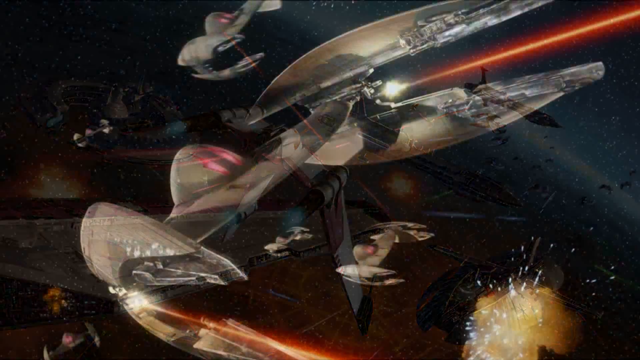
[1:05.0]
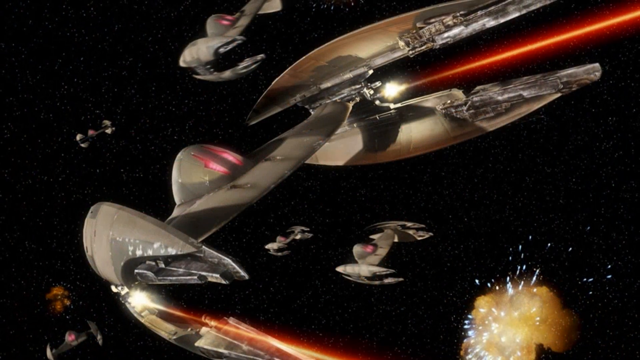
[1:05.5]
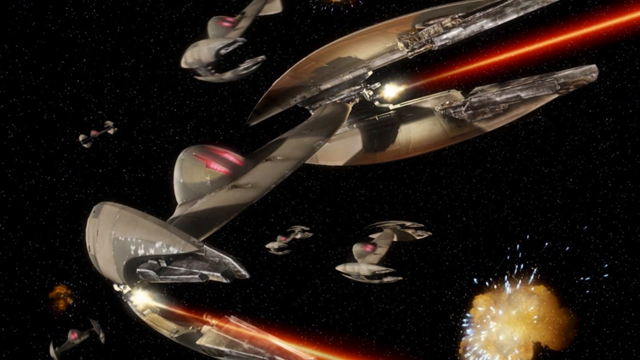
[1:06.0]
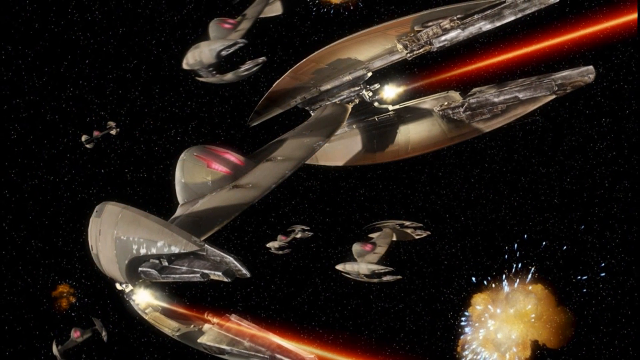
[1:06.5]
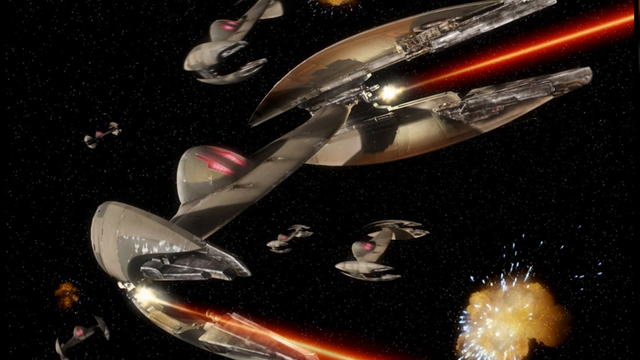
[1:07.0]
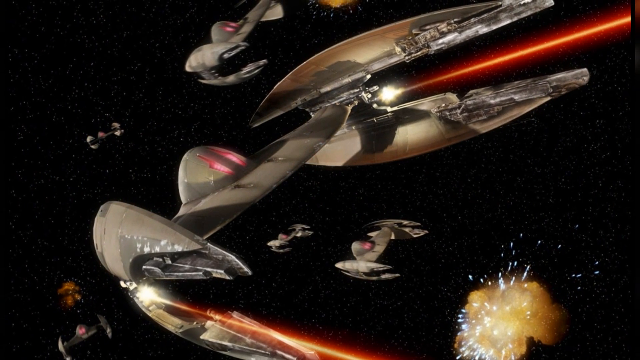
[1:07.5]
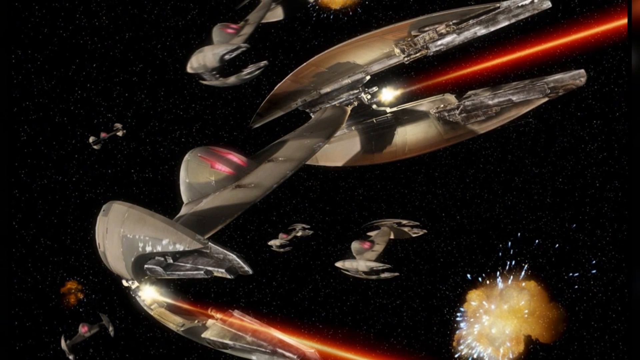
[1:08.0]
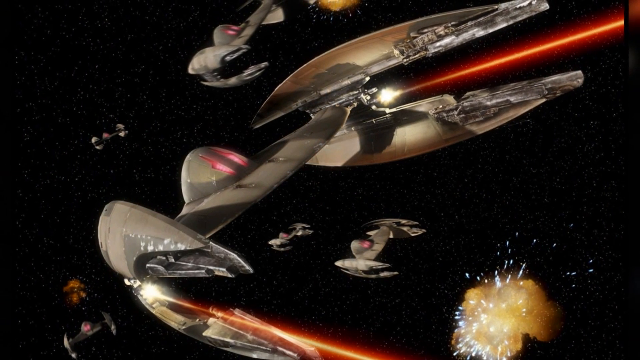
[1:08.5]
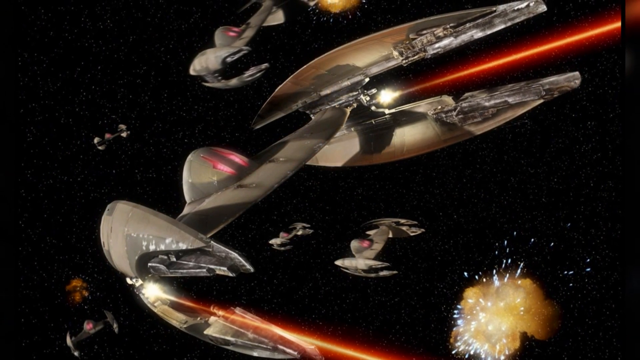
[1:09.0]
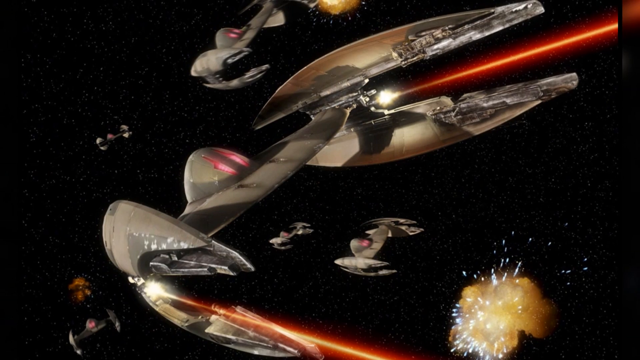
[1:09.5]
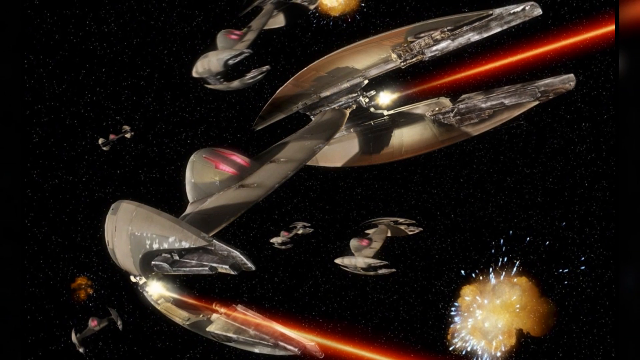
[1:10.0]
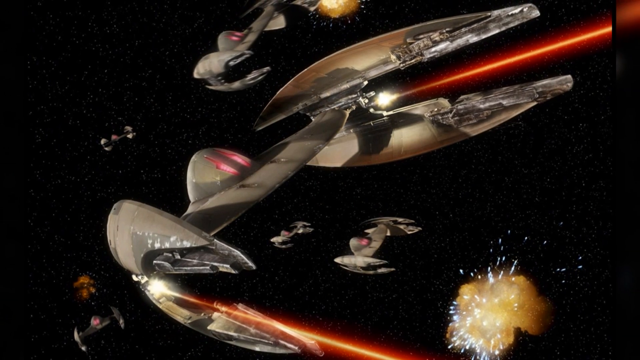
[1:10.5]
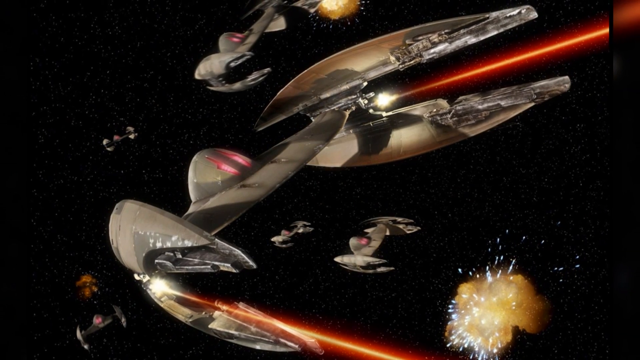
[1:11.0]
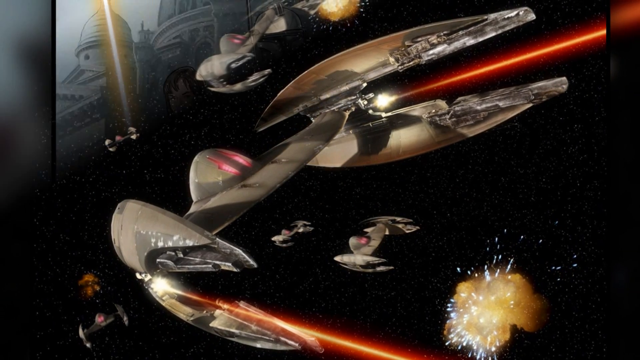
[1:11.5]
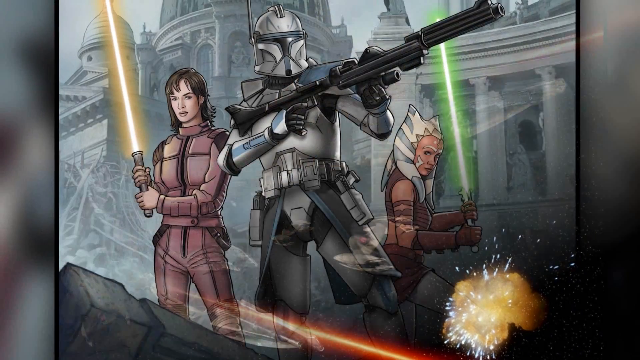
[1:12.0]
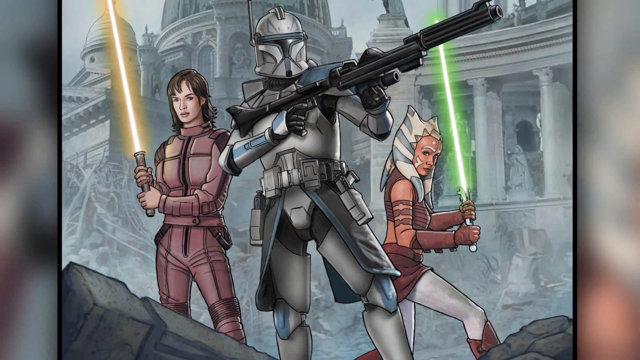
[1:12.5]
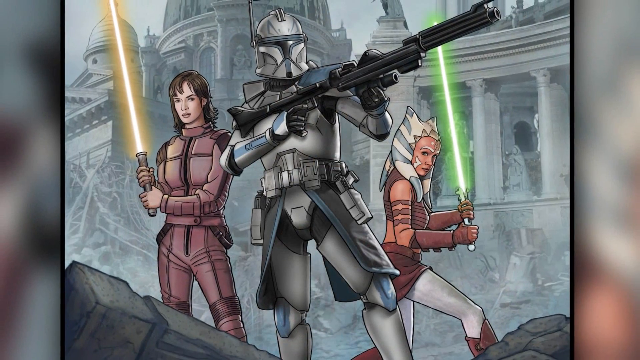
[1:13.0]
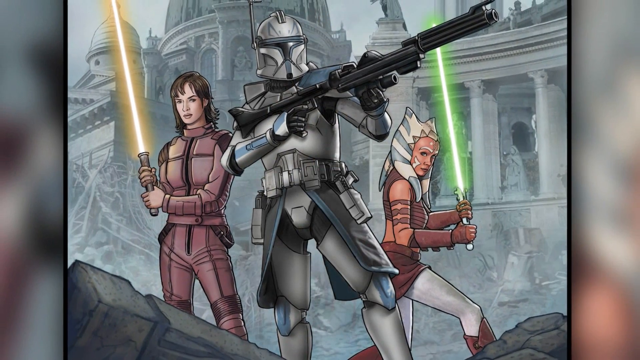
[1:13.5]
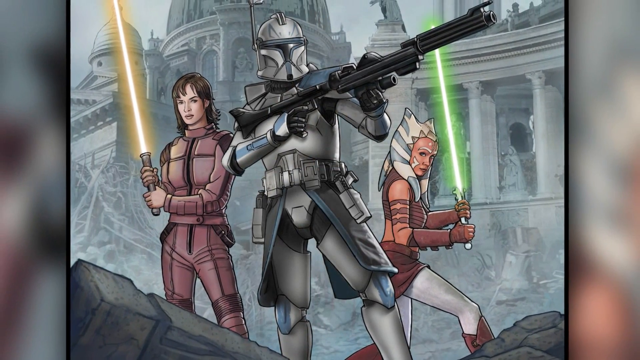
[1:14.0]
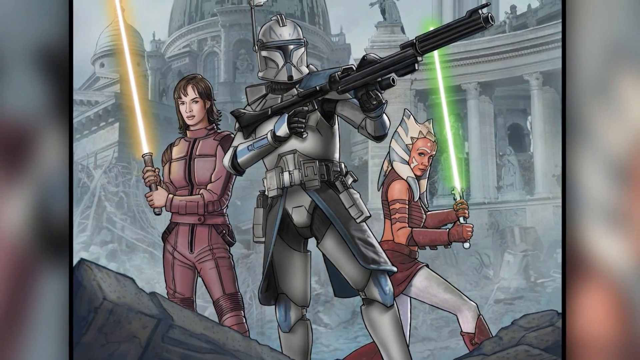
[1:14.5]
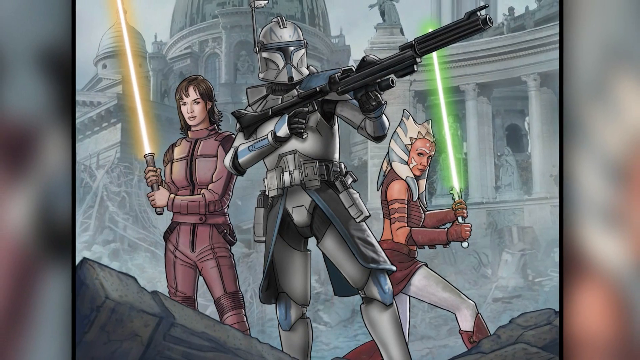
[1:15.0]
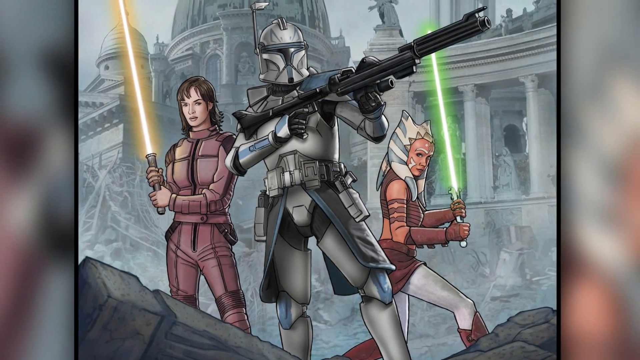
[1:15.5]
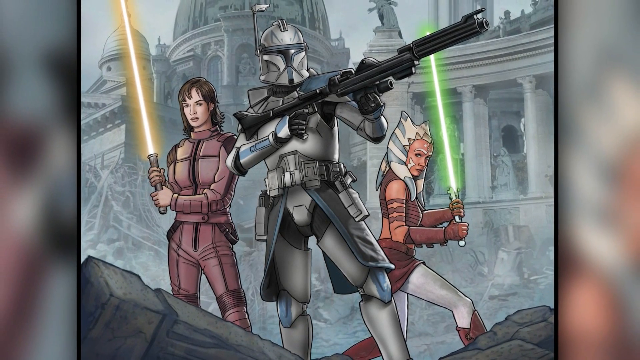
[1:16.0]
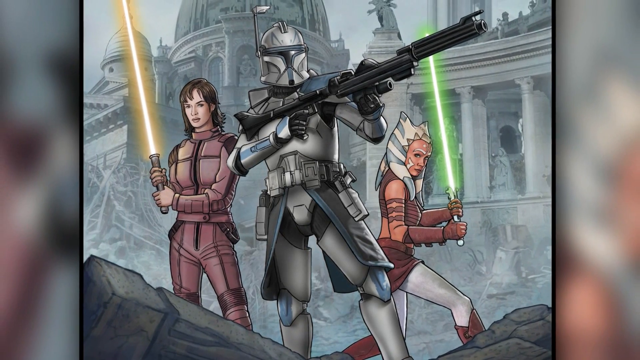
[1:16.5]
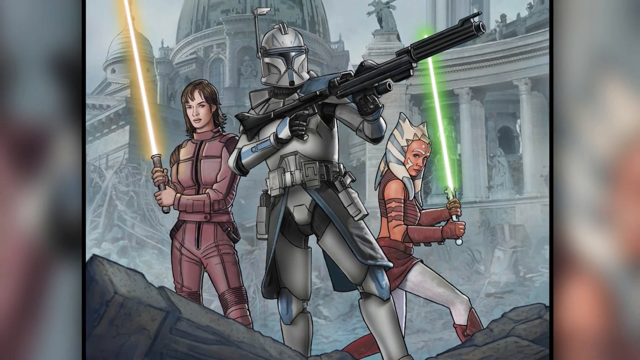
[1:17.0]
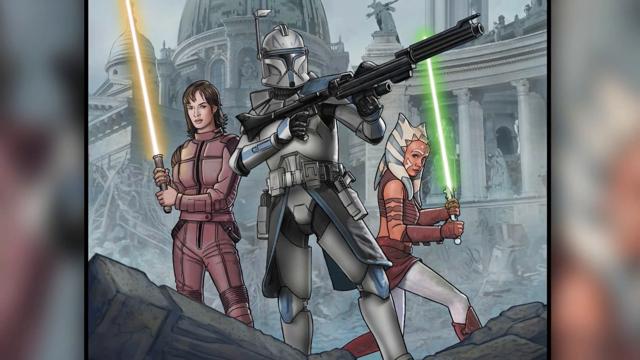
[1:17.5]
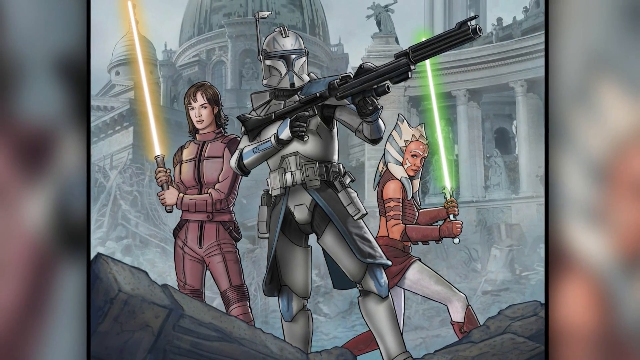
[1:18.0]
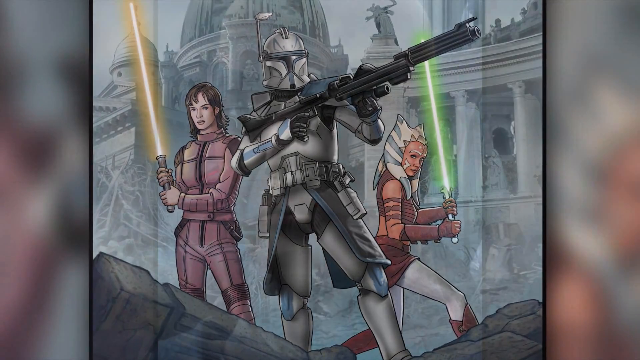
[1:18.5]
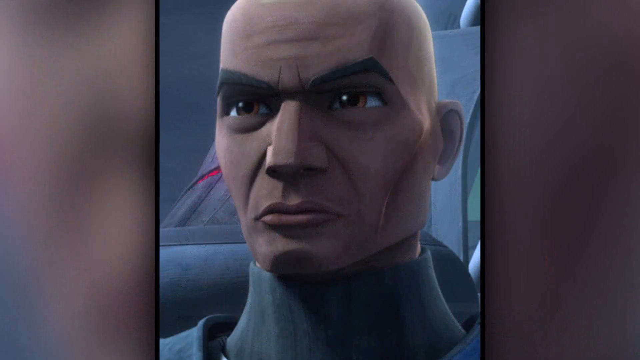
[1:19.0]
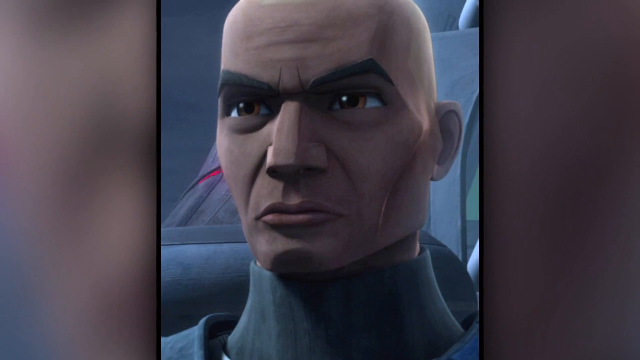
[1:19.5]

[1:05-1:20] A very dark black sky with tiny stars appears, with apparently multiple spaceships, at least five, along with laser beams and explosions. This leads to a scene with three people: two holding lasers in the background and a guy in a full metal suit in the foreground holding a gun of some sort. The person on the right has a green laser and seems to be wearing a hat of some sort. Behind the people with lasers is some kind of stone building, and there is also stone in the foreground. Next comes a close-up of an African American man's face; he has brown eyes, and there is a spaceship behind him.